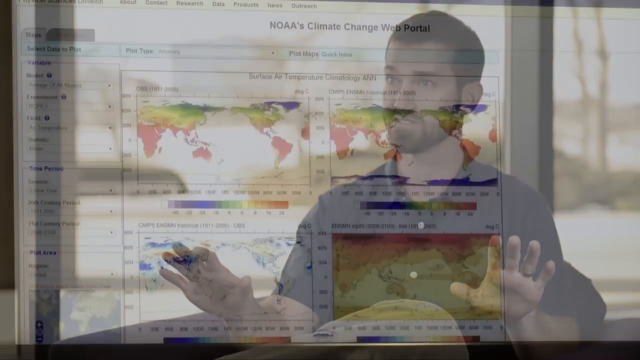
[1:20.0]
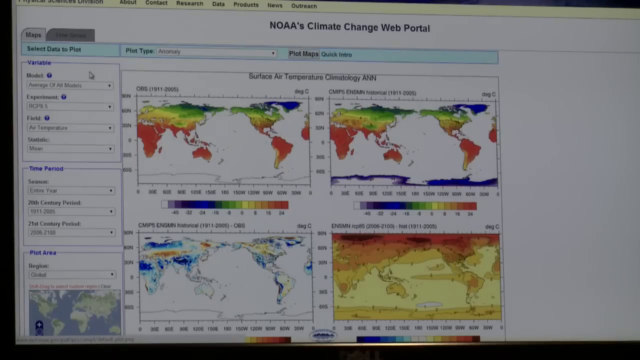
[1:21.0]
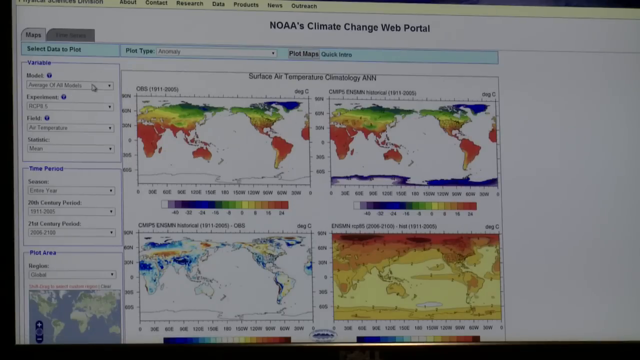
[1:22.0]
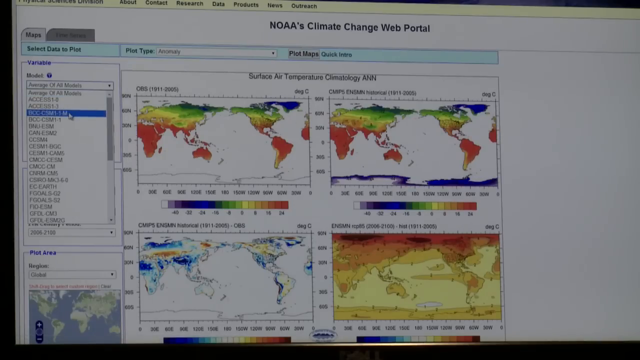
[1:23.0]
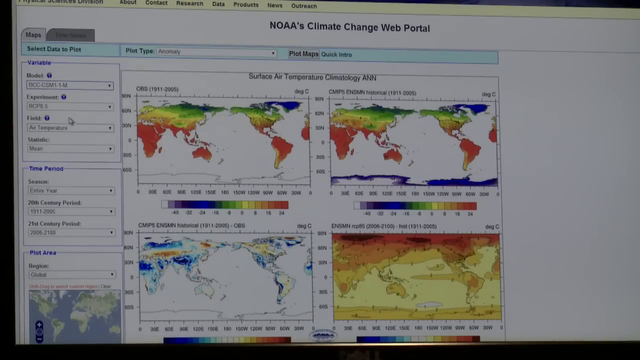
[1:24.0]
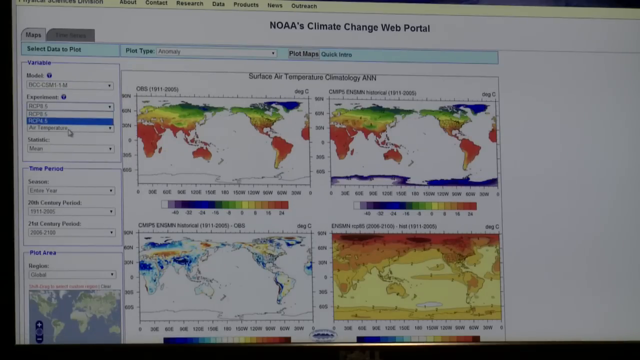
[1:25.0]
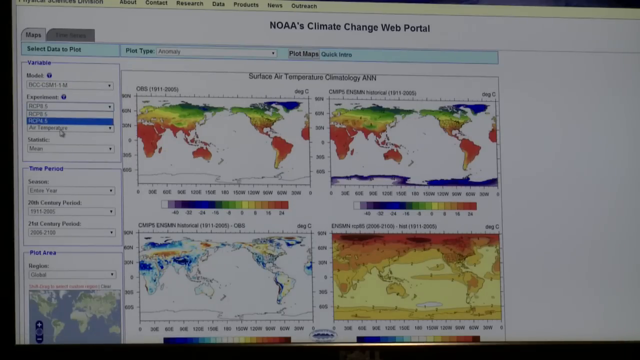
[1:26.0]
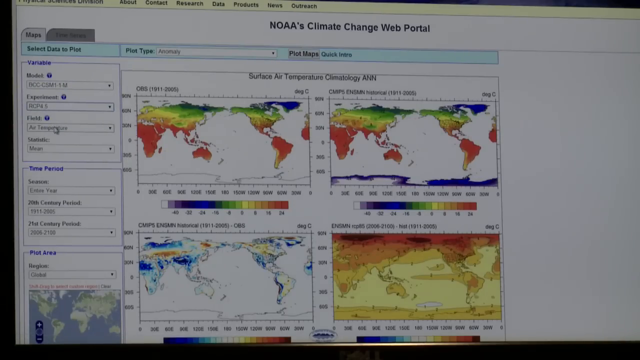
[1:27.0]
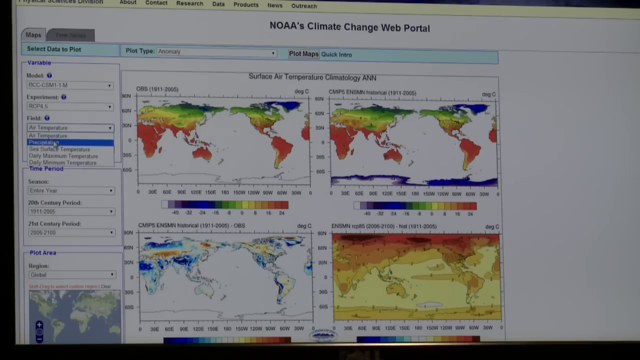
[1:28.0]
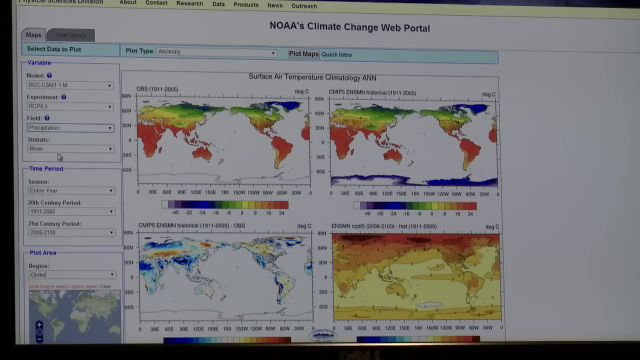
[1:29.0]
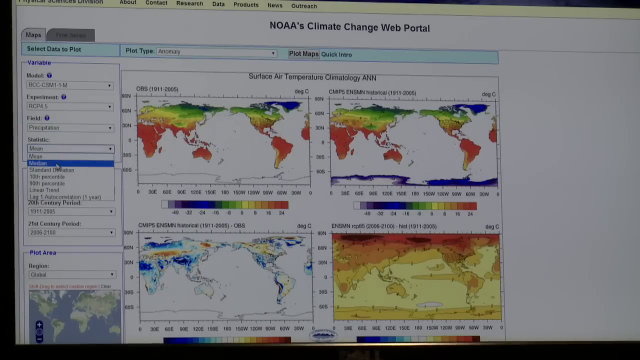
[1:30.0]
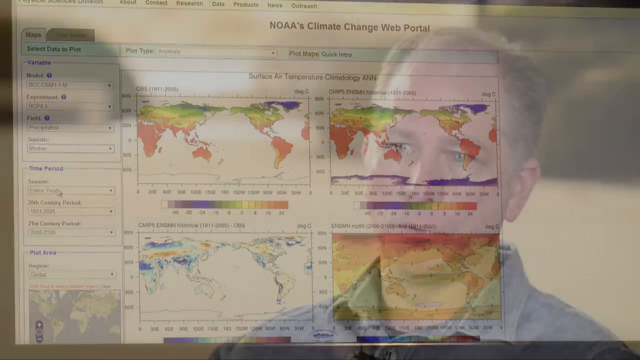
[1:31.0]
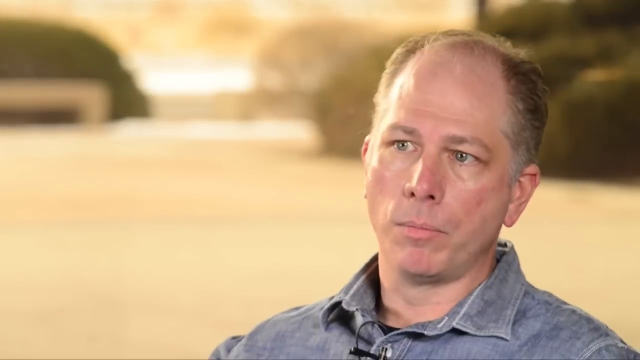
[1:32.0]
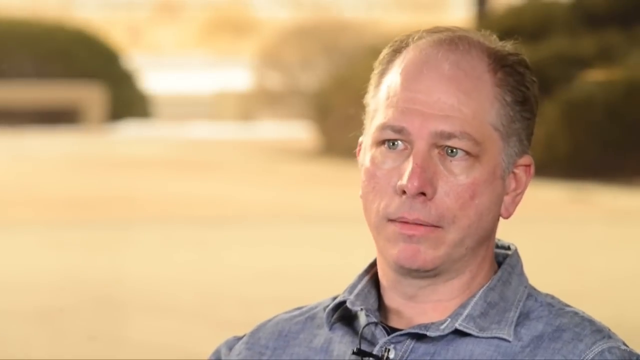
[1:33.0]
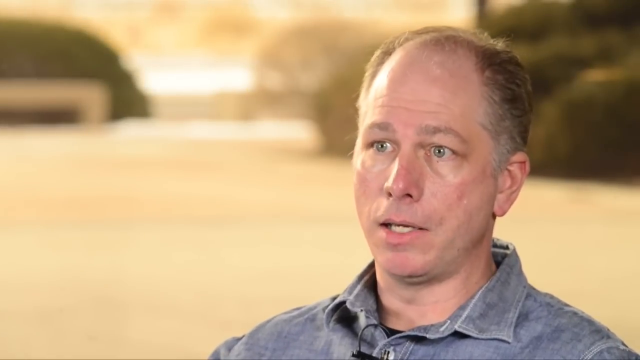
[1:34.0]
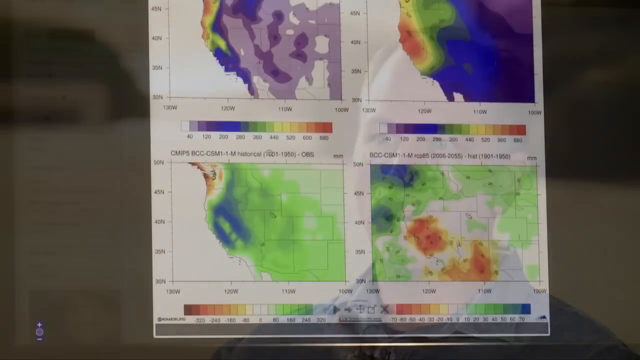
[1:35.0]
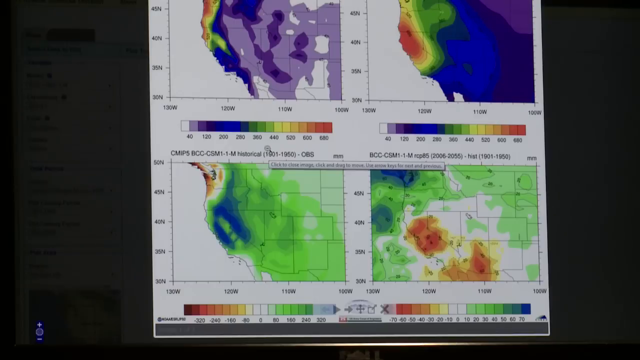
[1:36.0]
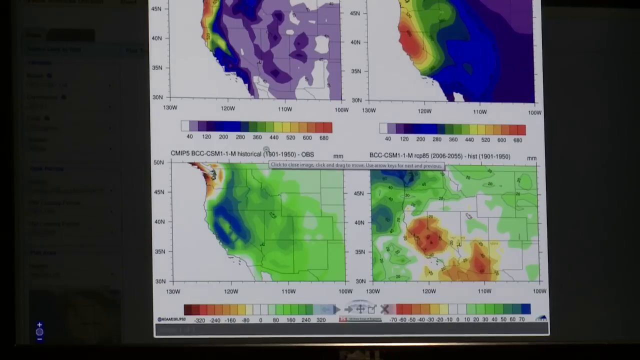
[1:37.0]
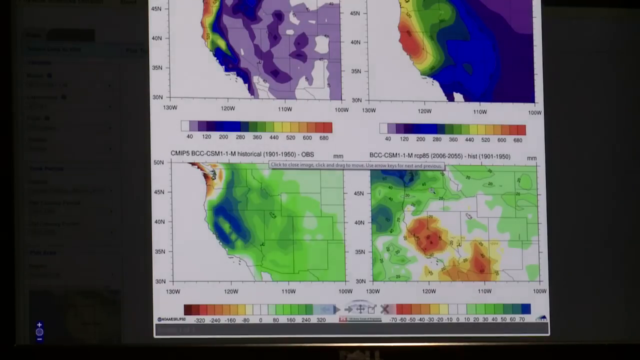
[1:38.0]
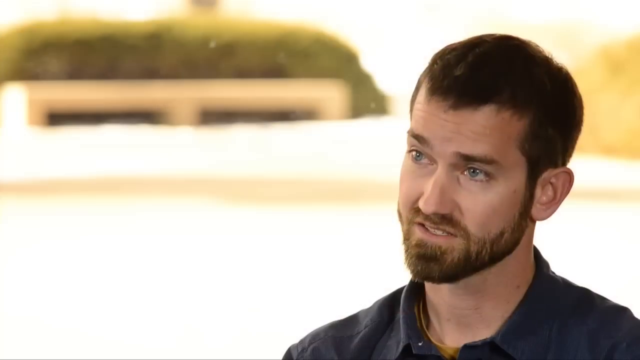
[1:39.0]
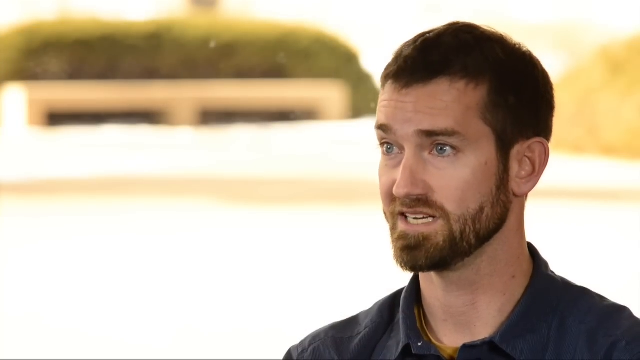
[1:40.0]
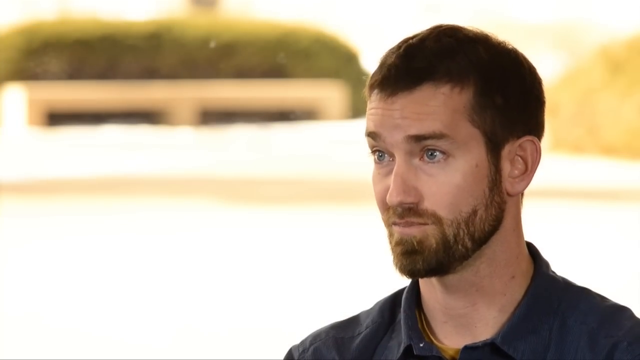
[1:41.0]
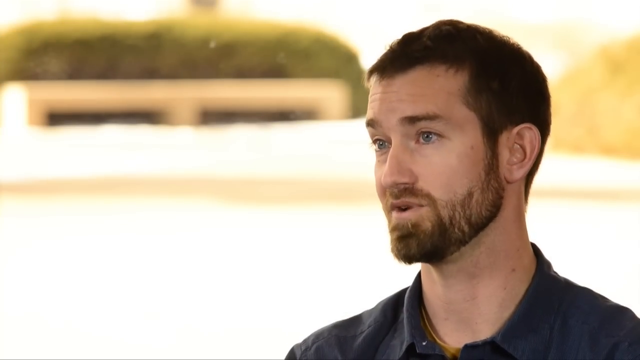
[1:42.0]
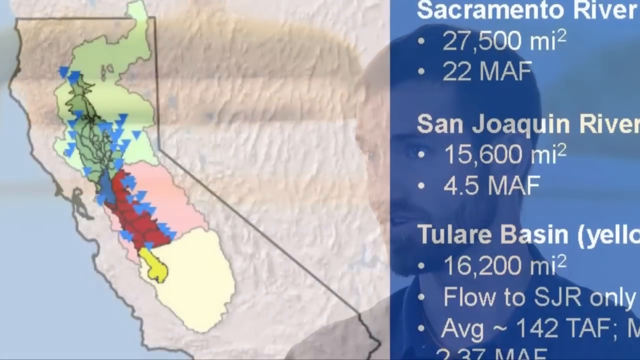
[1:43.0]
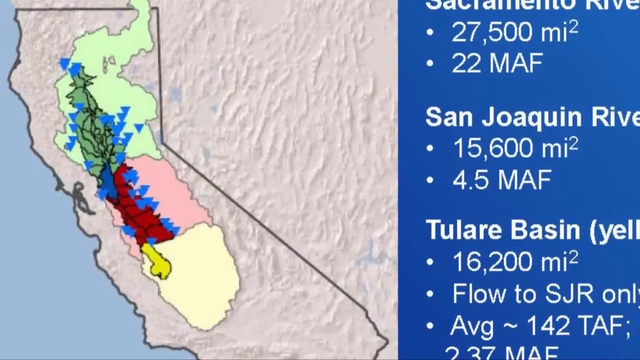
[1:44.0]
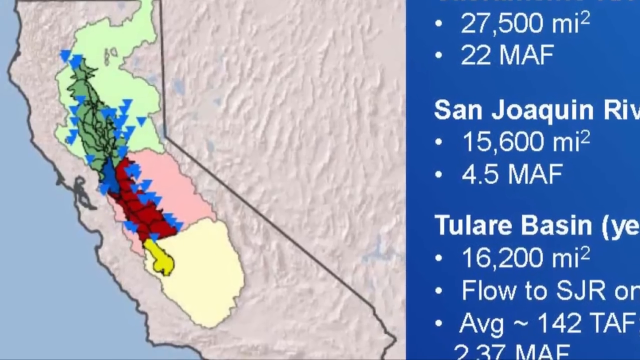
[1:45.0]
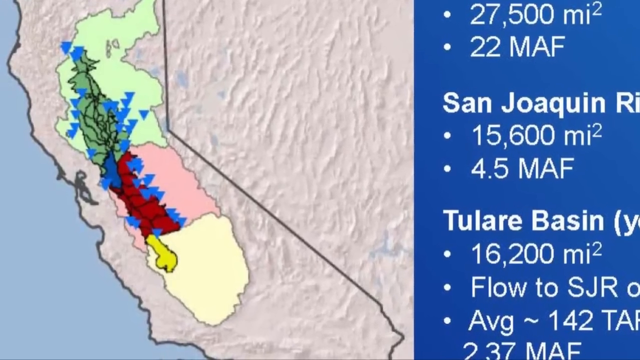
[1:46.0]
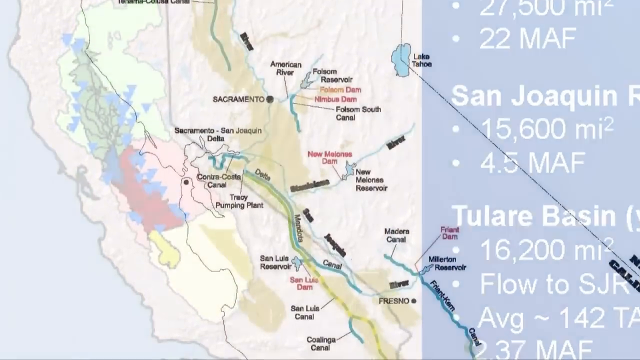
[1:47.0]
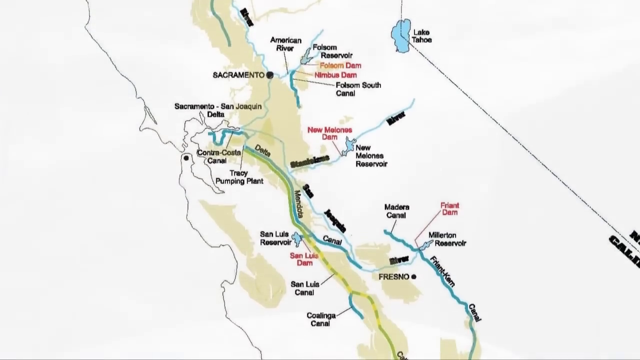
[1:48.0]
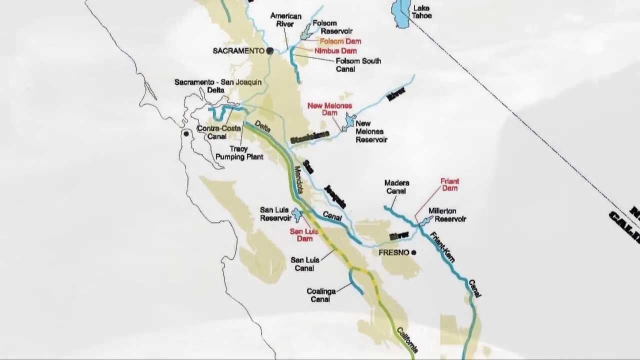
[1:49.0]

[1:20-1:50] A man with a dark beard, moustache and short dark hair talks to the camera. He wears a dark blue suit with white buttons and gesticulates with his hands as he talks. A graphic of a computer screen then says "the climate change web portal", showing maps of the world highlighted in different colours. Somebody uses the cursor on the left-hand side of the screen, highlighting different areas of writing and parts of the maps to look at in more detail. Another man, a white man who is slightly balding, then talks to the camera. More graphics or maps show different weather conditions. The video switches back to the man with short dark hair, who is again being interviewed and talking to somebody off camera. Then a map of the San Joaquin River is highlighted in different colours, seemingly green and blue with a small red section in the middle.